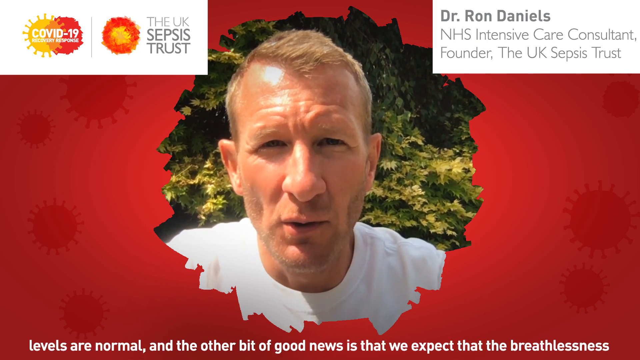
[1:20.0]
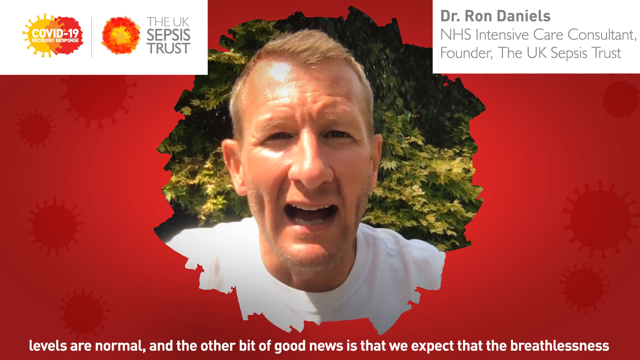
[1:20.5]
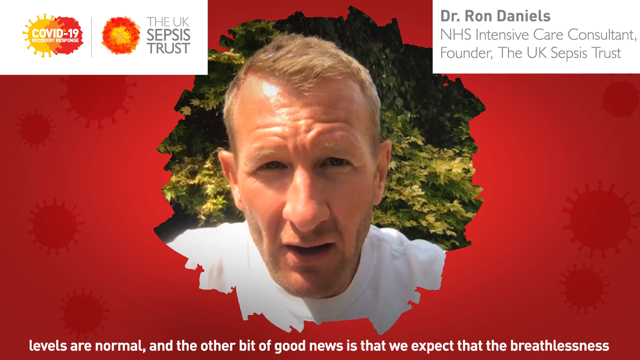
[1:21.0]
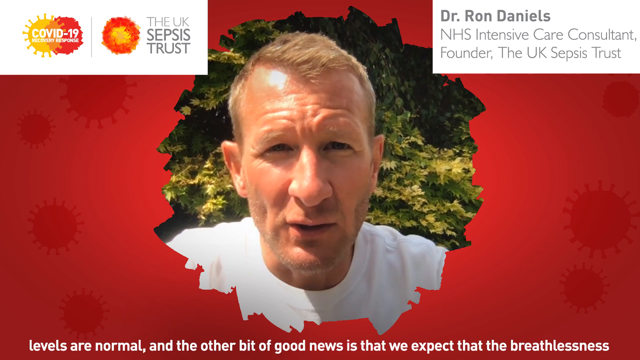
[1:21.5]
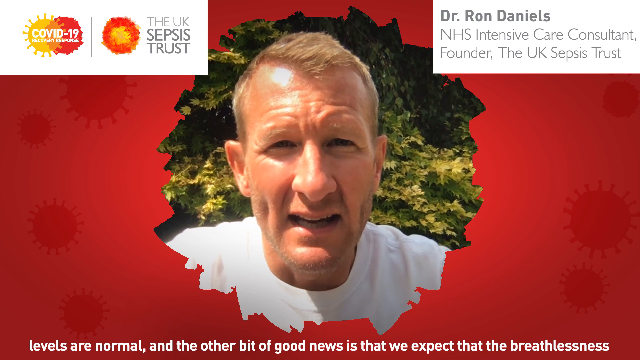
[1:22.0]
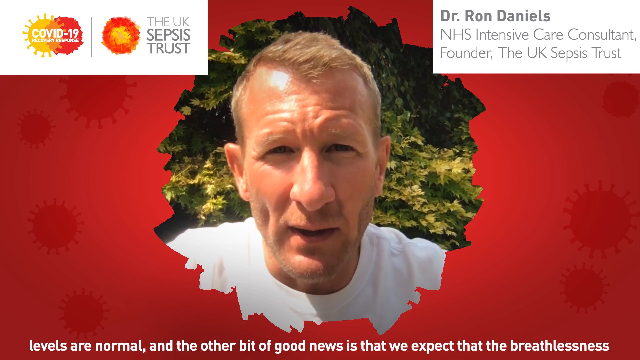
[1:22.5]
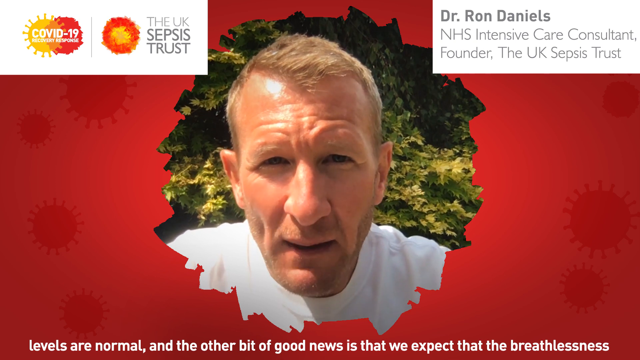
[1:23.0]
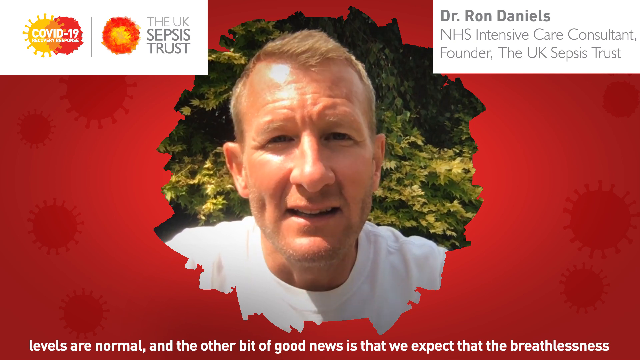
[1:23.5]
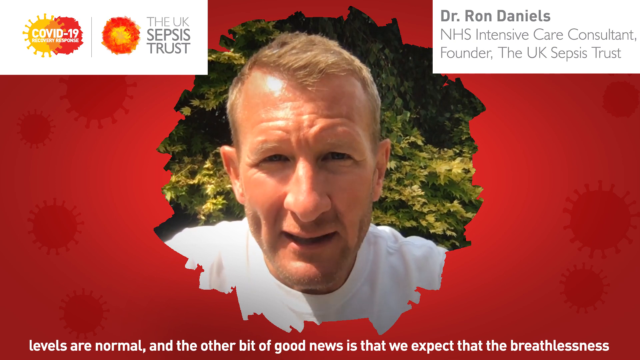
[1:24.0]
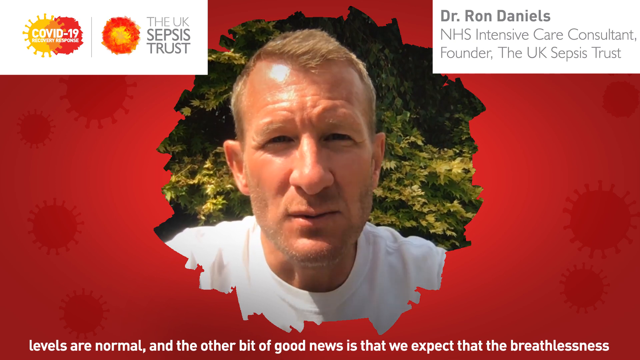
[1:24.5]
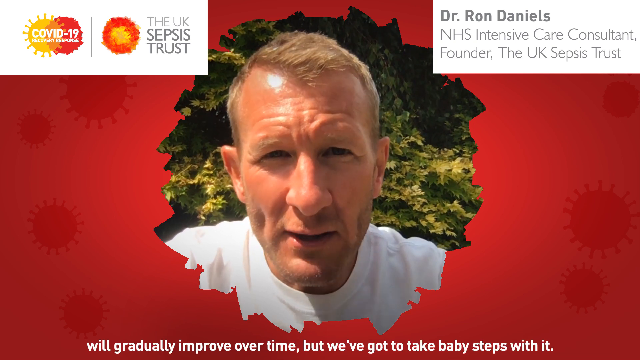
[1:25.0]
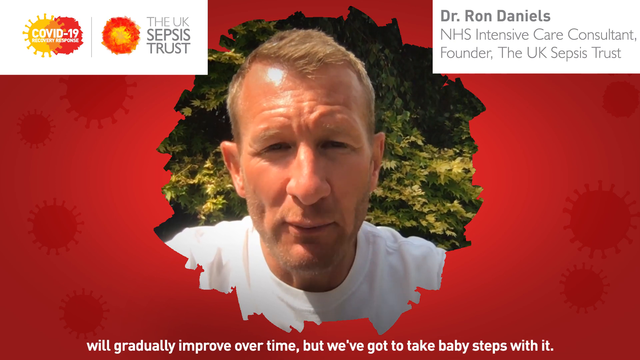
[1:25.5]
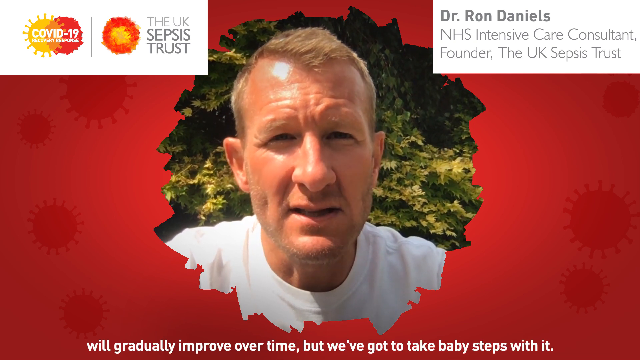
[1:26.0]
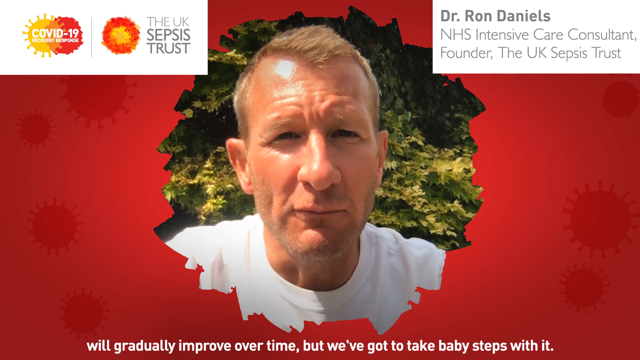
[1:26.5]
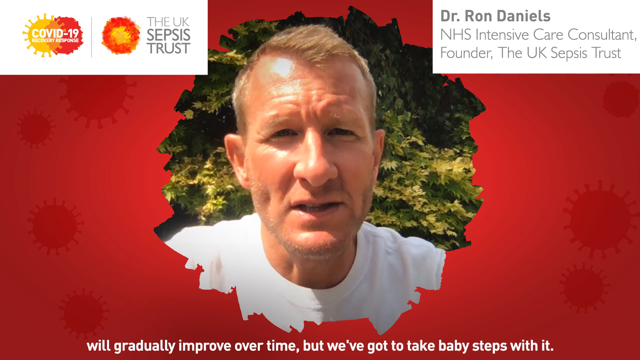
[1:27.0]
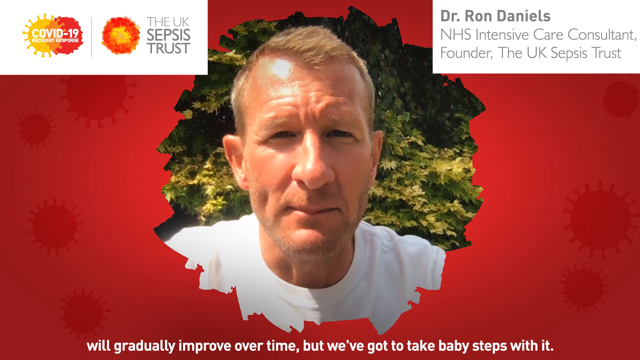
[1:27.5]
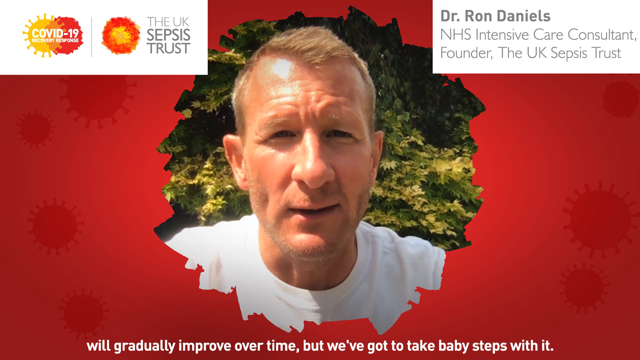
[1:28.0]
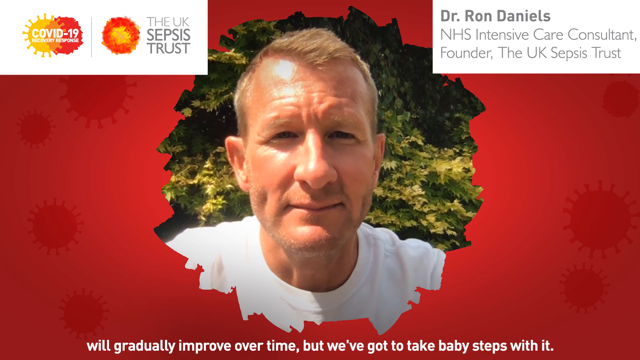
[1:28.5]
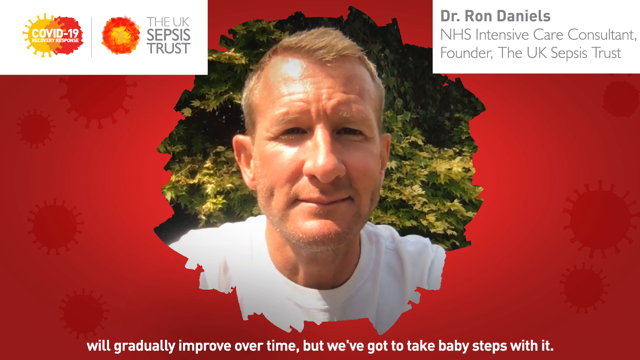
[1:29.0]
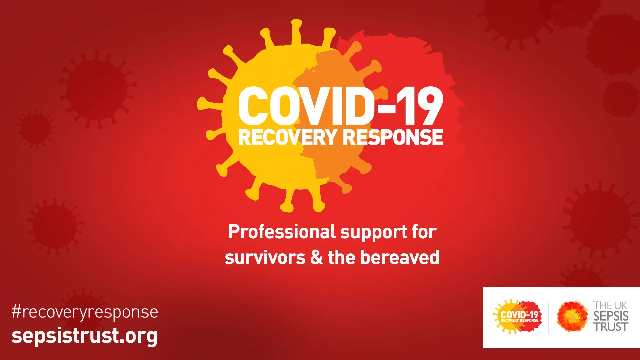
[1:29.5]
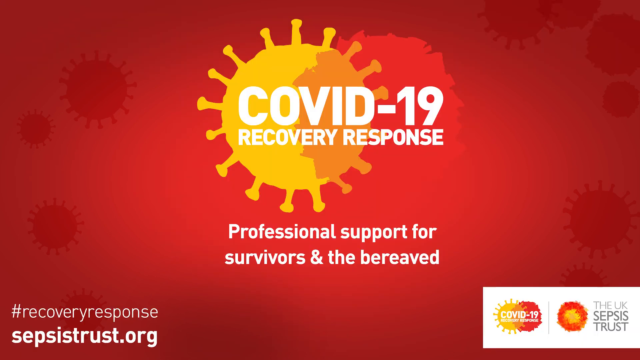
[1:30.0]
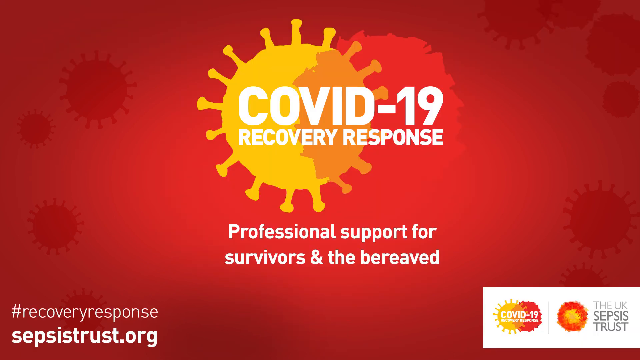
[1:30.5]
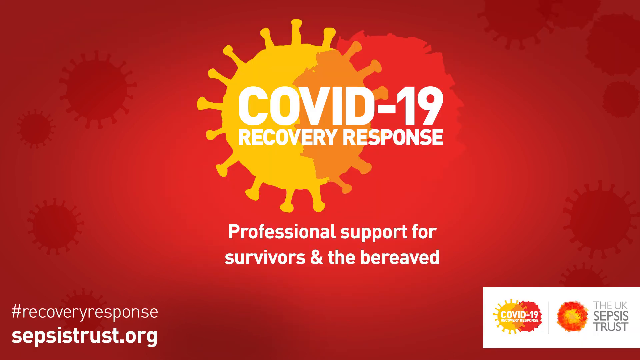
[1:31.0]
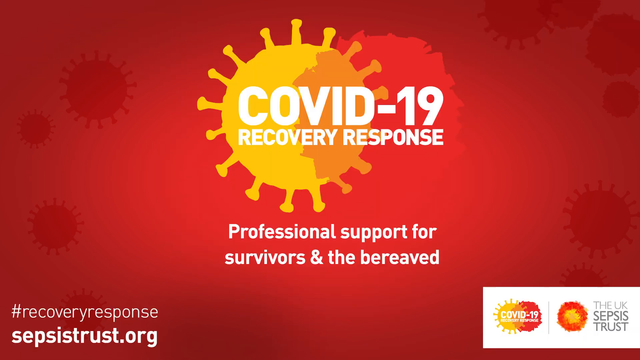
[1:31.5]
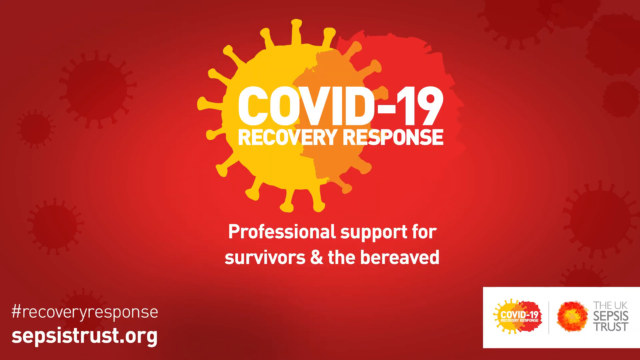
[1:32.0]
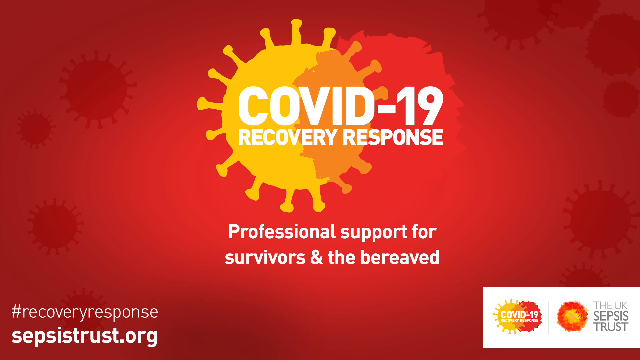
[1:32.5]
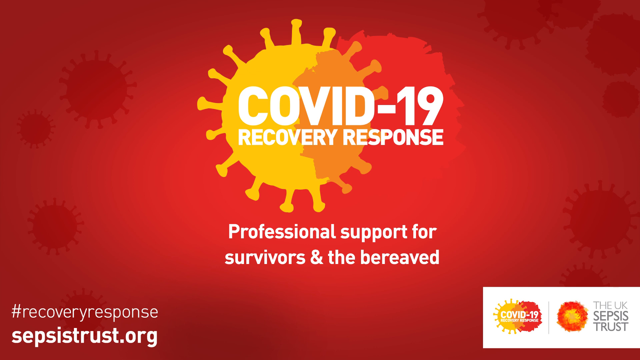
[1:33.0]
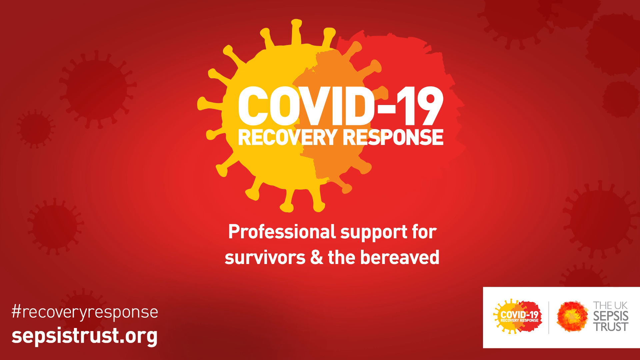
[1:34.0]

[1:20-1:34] At the end the logo is enlarged on a red background: a sort of COVID-19 recovery response logo in the very center on the red, with the smaller COVID-19 recovery response logo kind of off to the right side. The UK sepsis trust is also given down to the right. In the bottom left is "#recovery response sepsistrust.org".